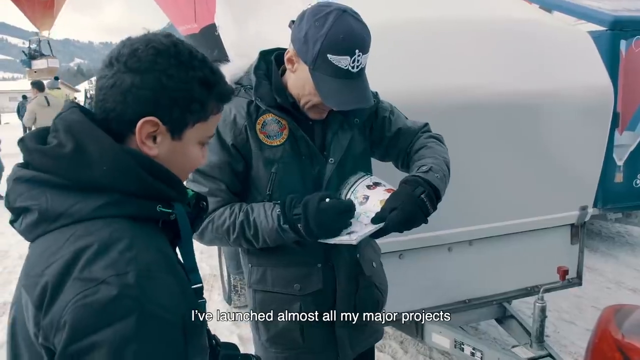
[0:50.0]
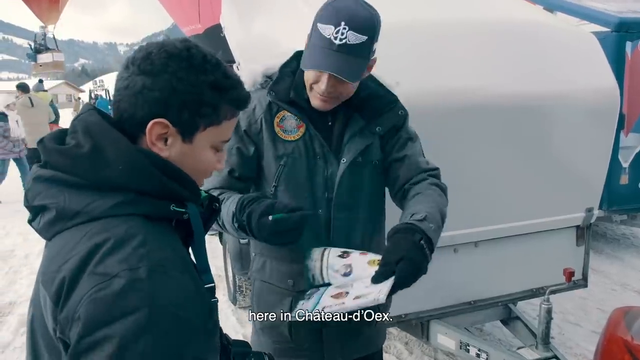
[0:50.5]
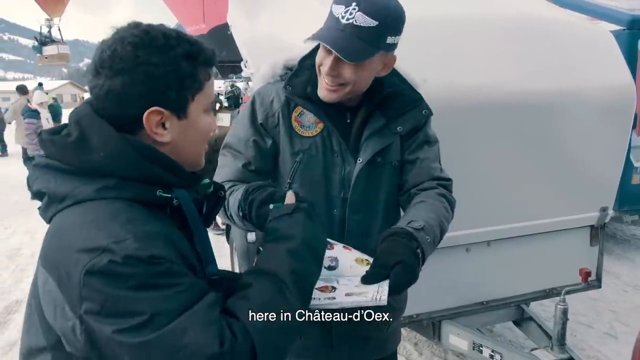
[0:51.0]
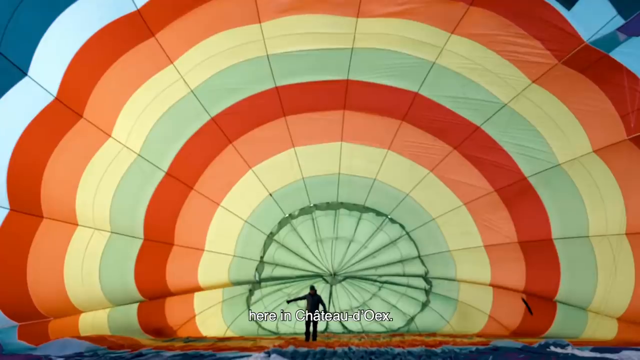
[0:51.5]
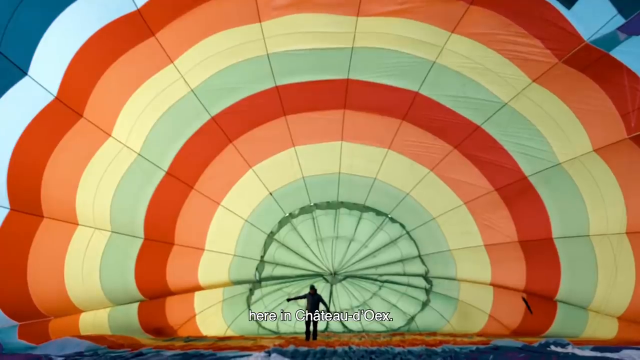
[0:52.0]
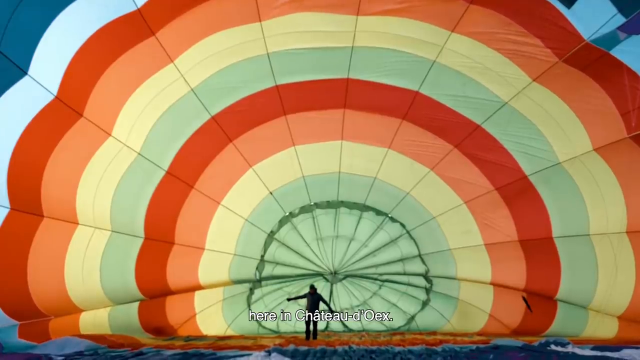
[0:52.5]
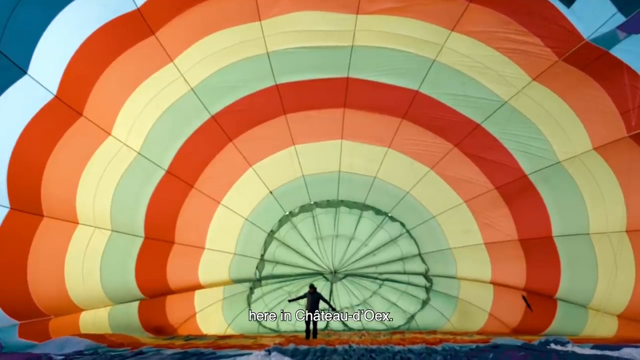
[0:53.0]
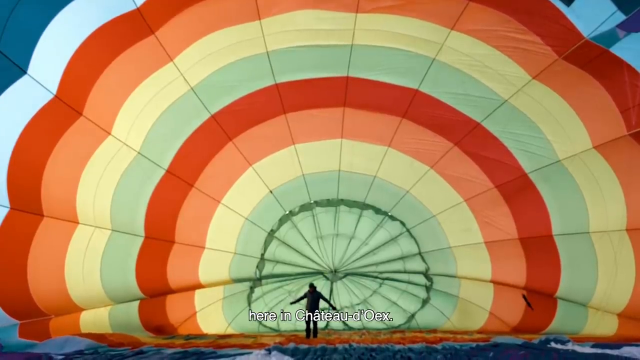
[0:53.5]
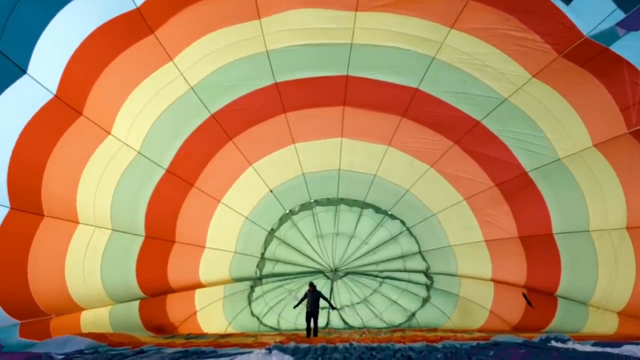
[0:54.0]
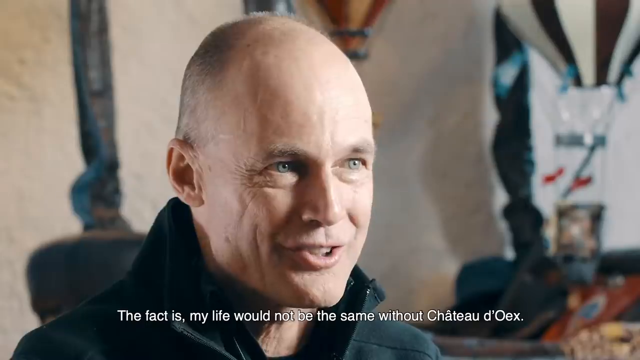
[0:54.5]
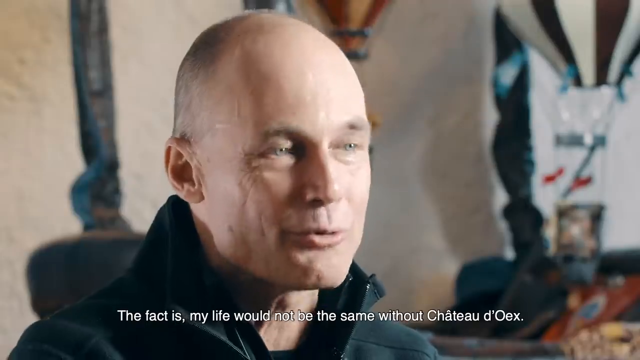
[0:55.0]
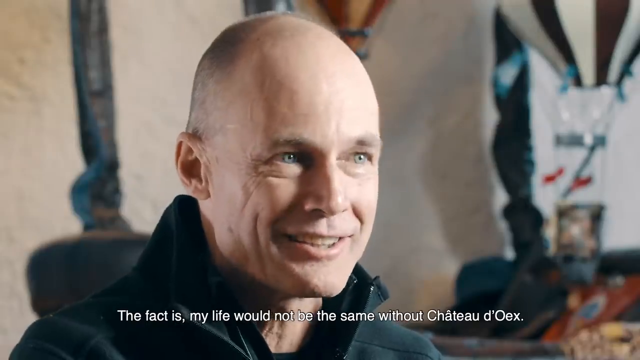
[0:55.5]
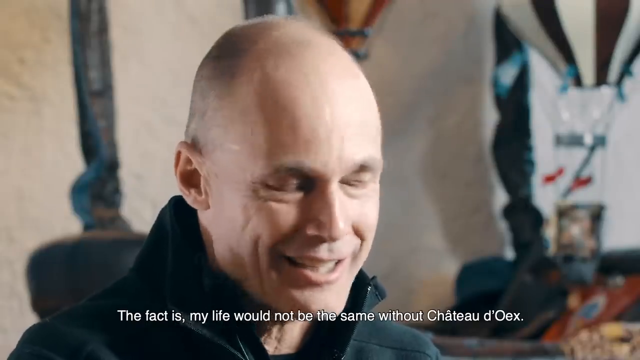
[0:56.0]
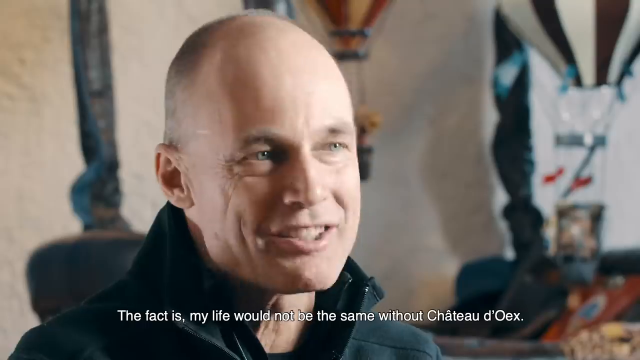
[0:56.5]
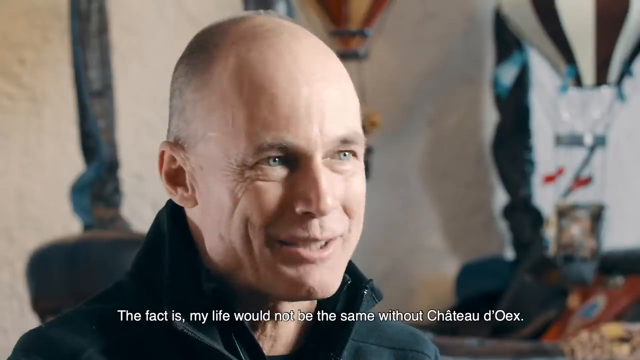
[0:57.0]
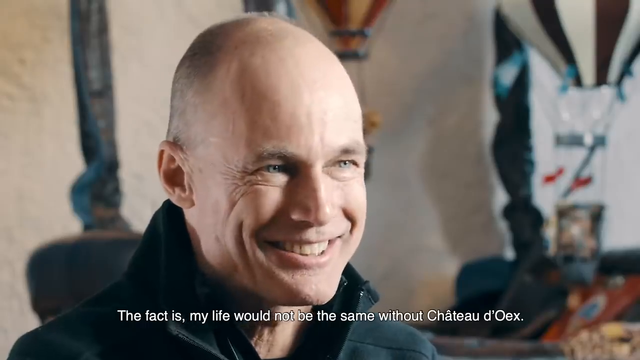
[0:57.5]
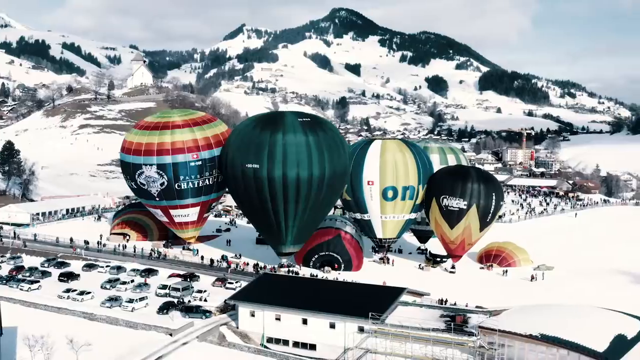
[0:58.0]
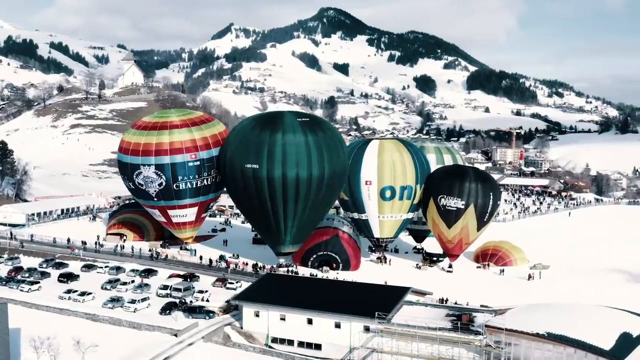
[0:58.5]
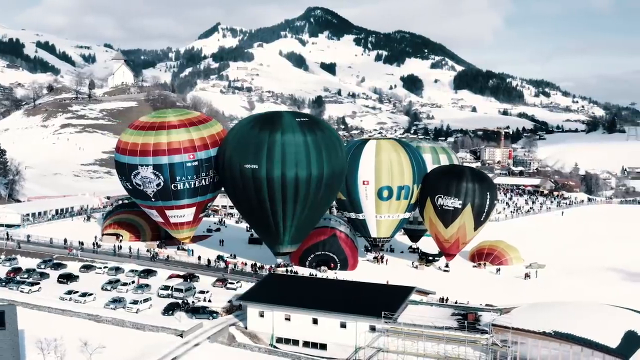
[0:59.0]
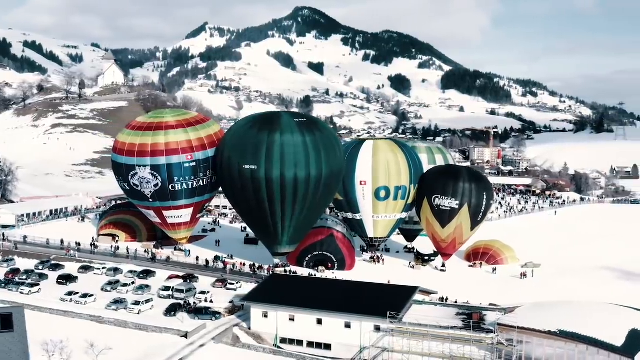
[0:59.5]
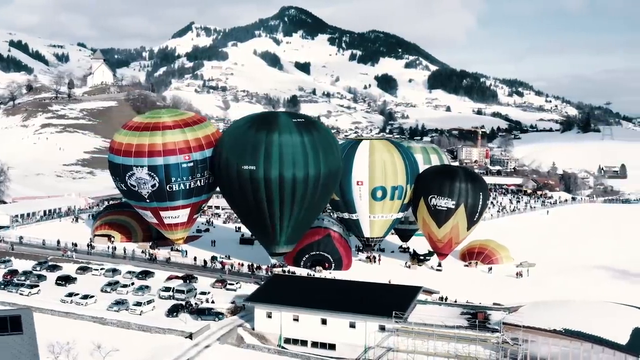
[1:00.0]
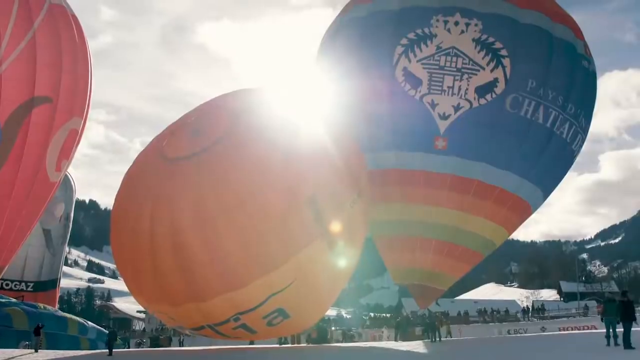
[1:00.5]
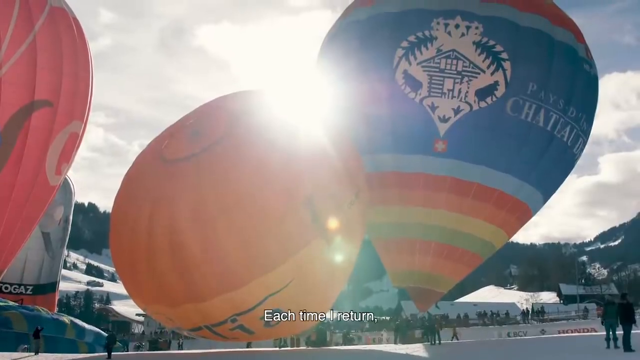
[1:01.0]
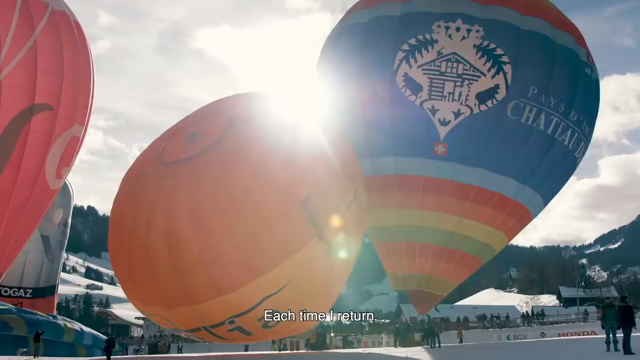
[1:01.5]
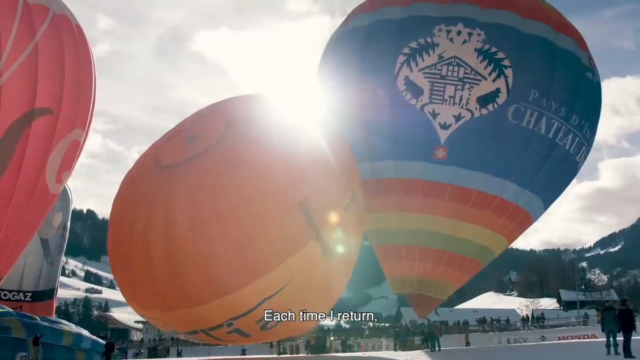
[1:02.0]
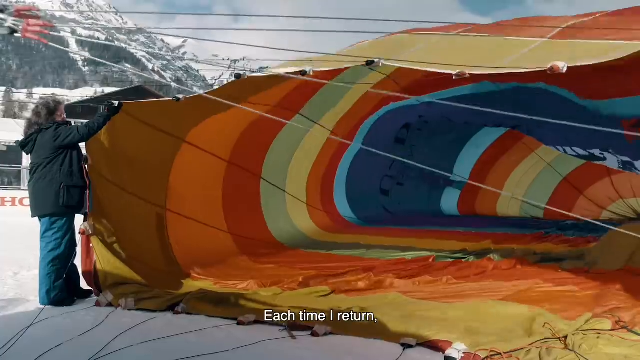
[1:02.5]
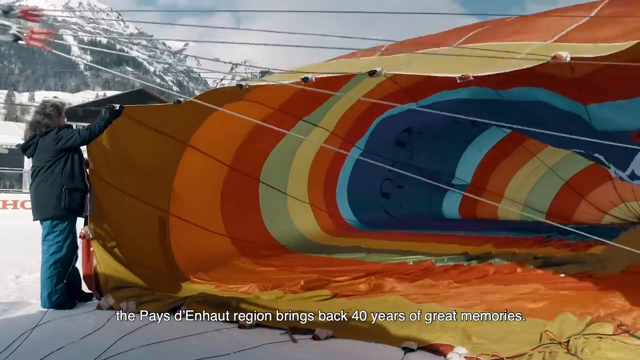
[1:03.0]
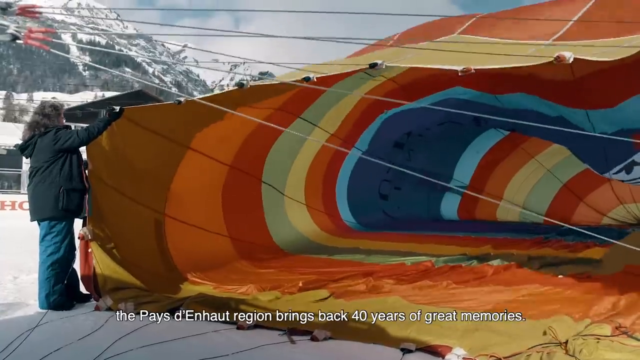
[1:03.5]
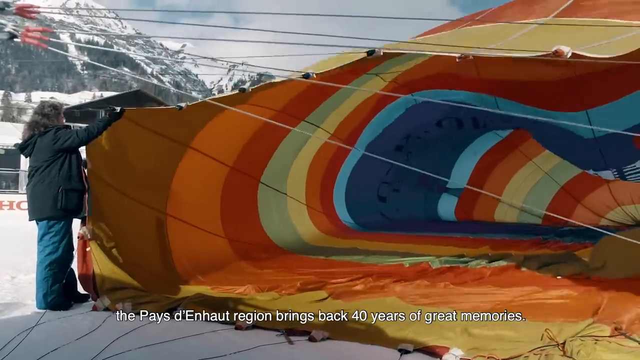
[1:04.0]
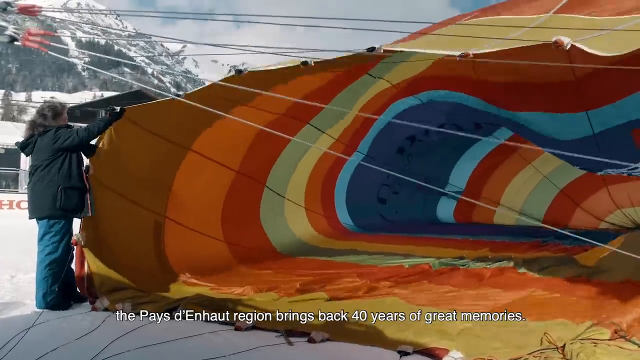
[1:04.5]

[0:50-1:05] The bald man in a fleece vest, who looks like he may be retired military, finishes signing the autograph-like picture and hands it back to a kid in a coat, who looks happy to have the signature. The video goes back and forth between an intimate one-on-one interview space, where the man is talking, and the balloons. A really big rainbow-colored balloon is apparently being spread out; its bright colors take up the entire screen as it opens up, with strings coming out of it and one person in the green center, who looks small in comparison. The camera then zooms out to show all the balloons together side by side, resting. Some are smaller than others, and the people look tiny next to them. The video pans back and forth between that image and the man talking, smiling and laughing; he seems proud of the organization.